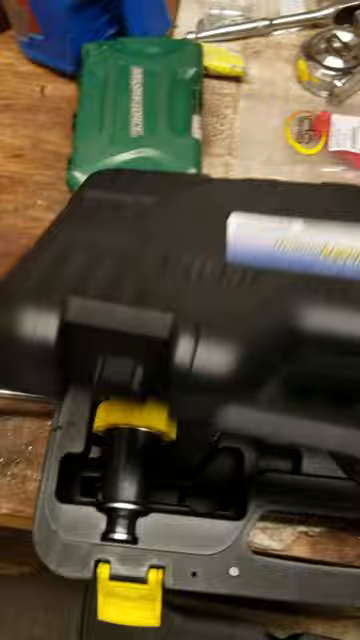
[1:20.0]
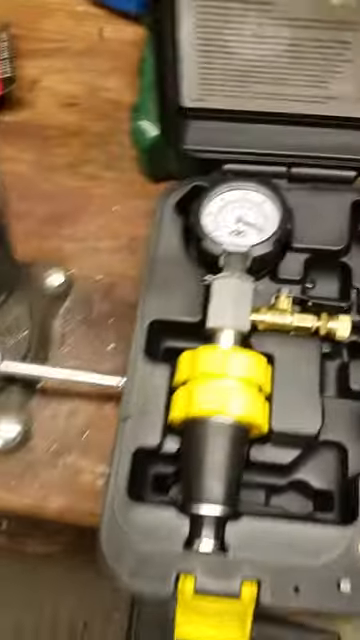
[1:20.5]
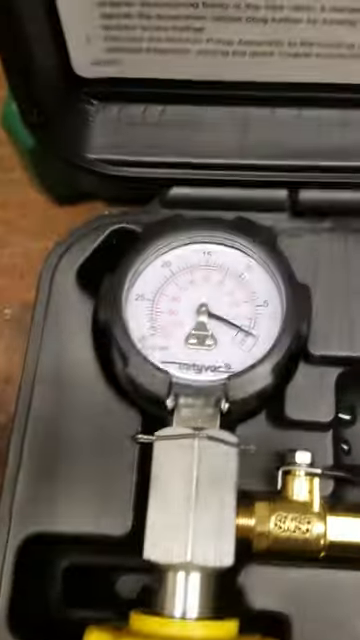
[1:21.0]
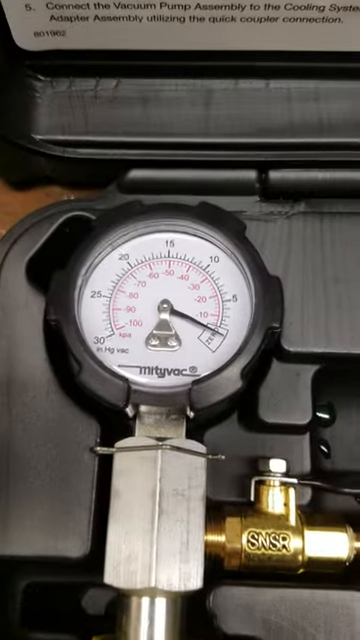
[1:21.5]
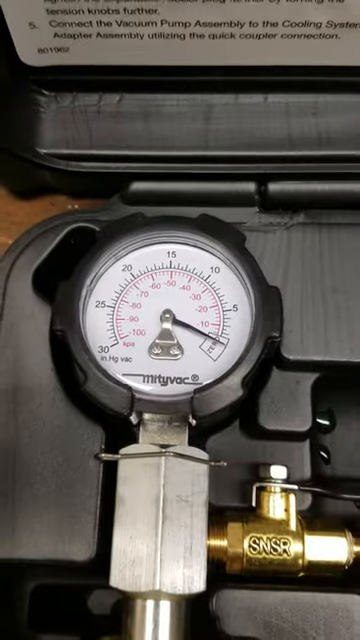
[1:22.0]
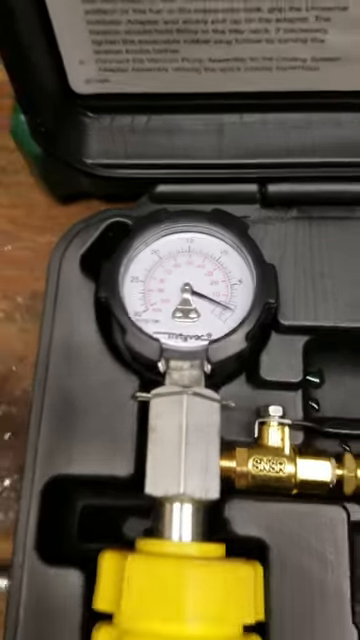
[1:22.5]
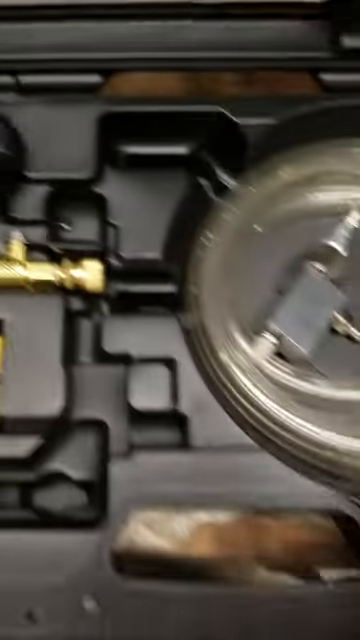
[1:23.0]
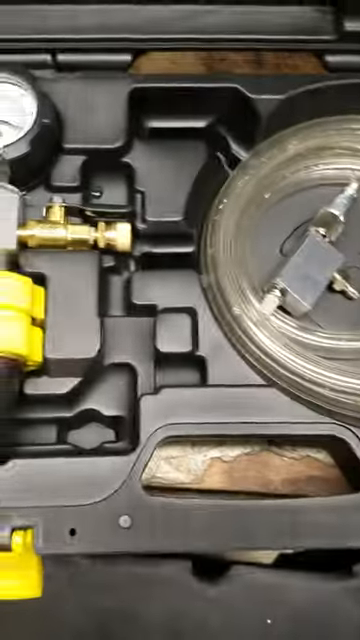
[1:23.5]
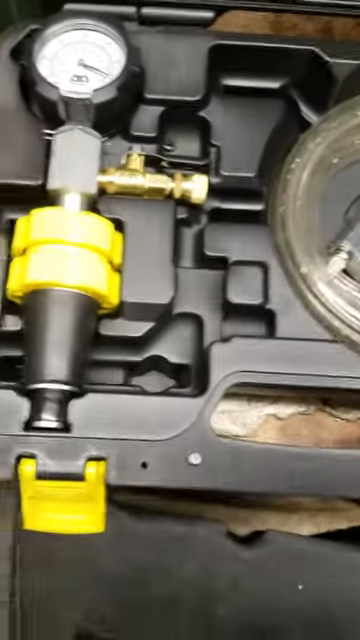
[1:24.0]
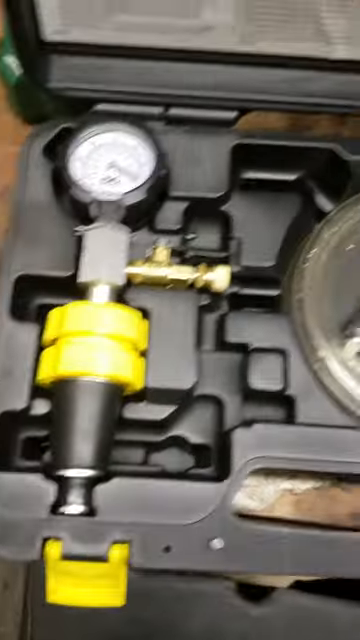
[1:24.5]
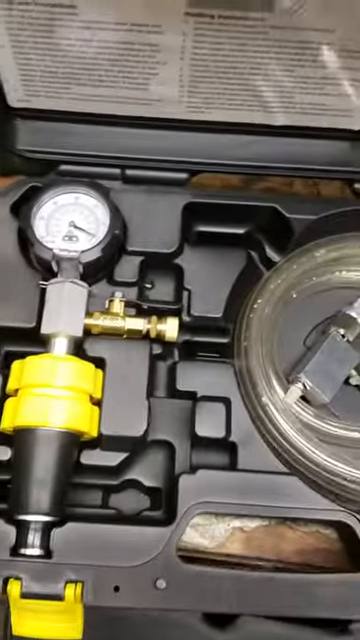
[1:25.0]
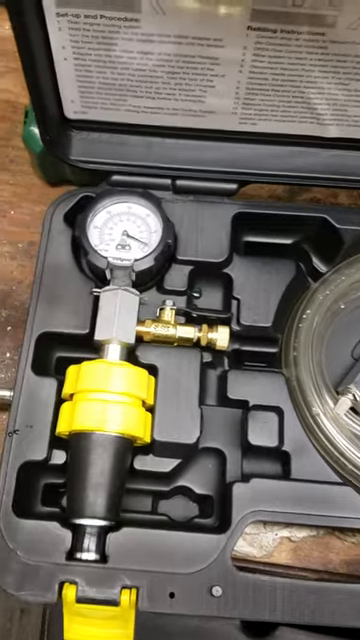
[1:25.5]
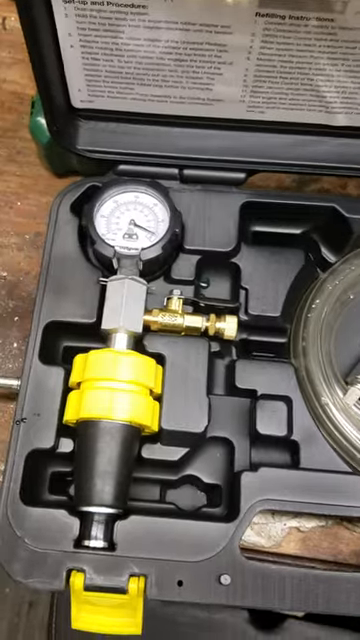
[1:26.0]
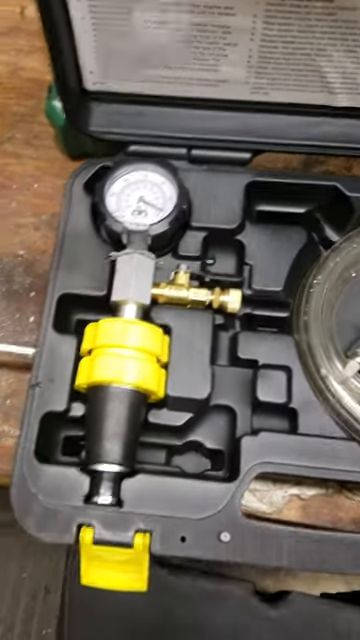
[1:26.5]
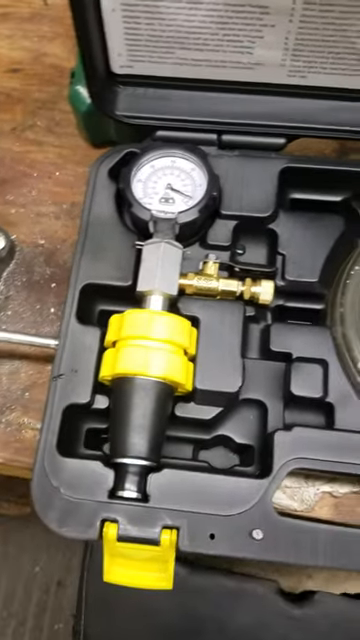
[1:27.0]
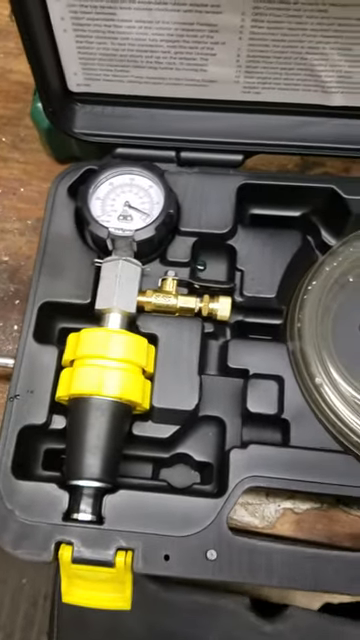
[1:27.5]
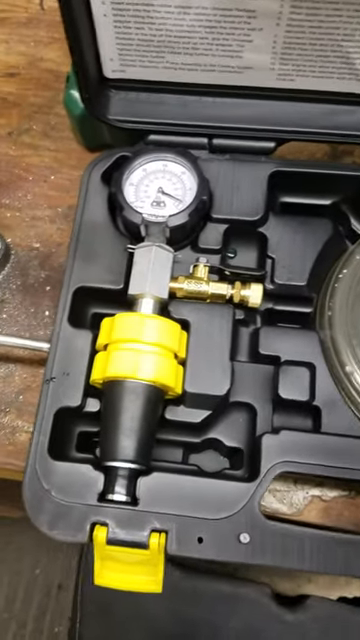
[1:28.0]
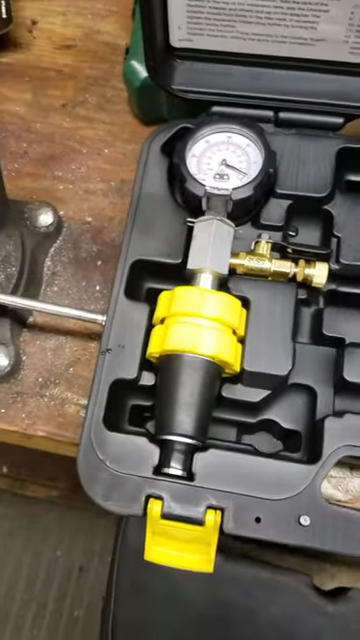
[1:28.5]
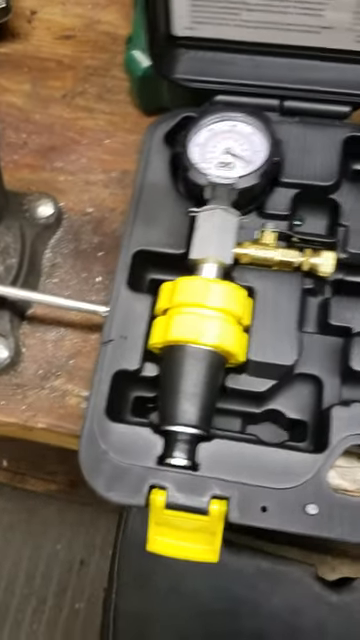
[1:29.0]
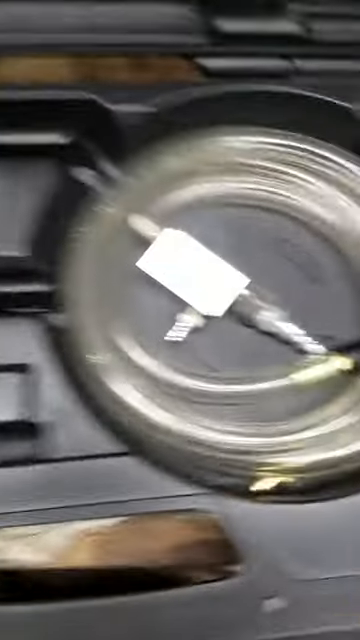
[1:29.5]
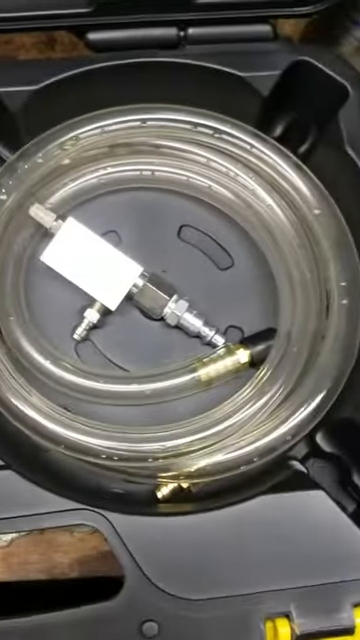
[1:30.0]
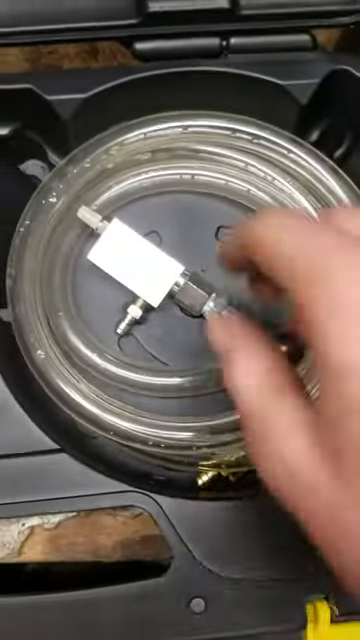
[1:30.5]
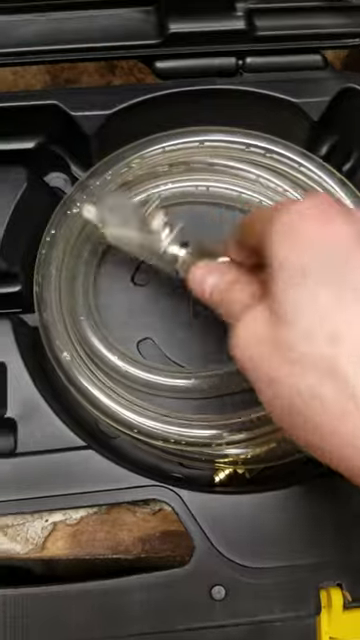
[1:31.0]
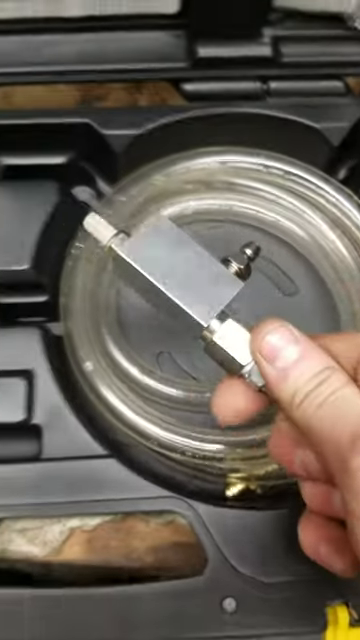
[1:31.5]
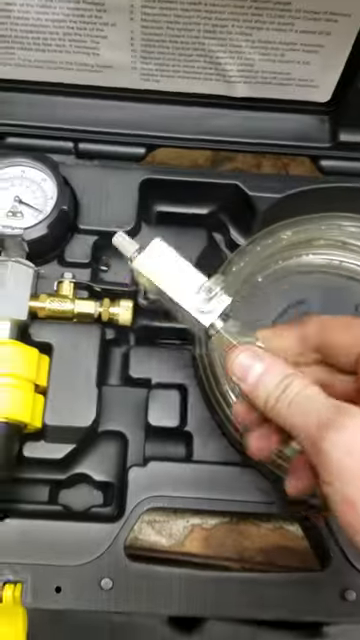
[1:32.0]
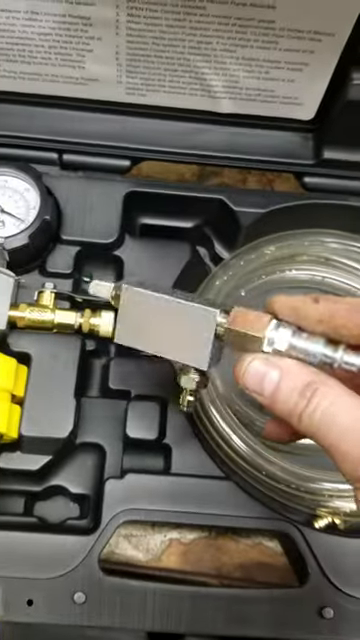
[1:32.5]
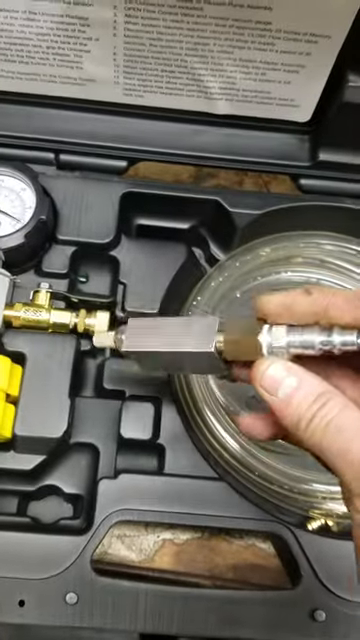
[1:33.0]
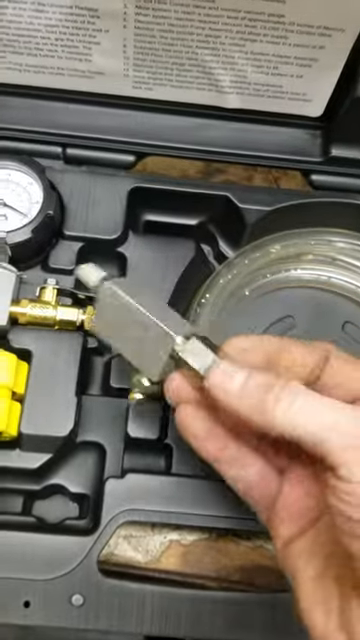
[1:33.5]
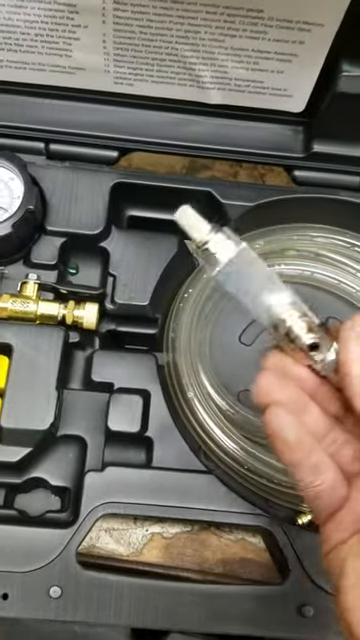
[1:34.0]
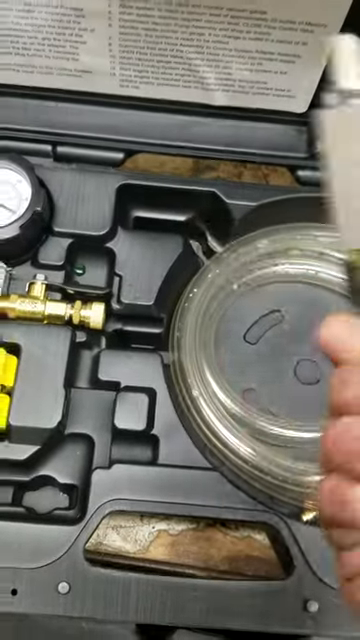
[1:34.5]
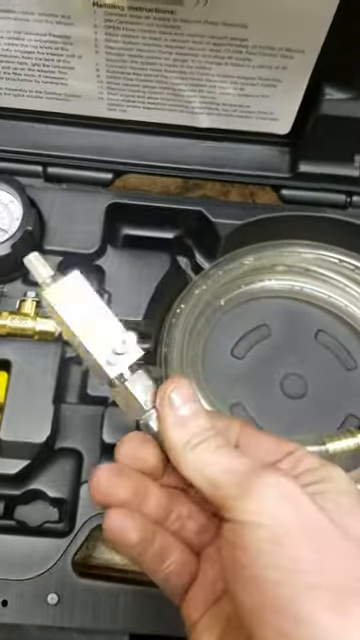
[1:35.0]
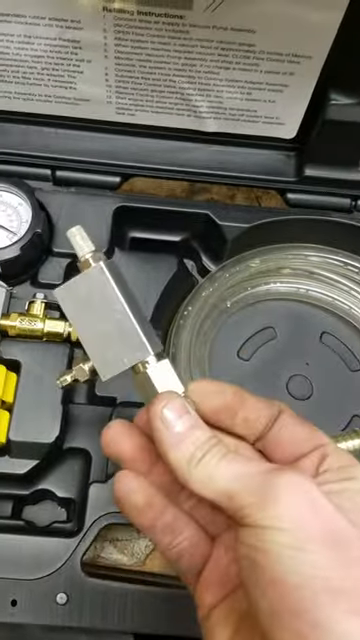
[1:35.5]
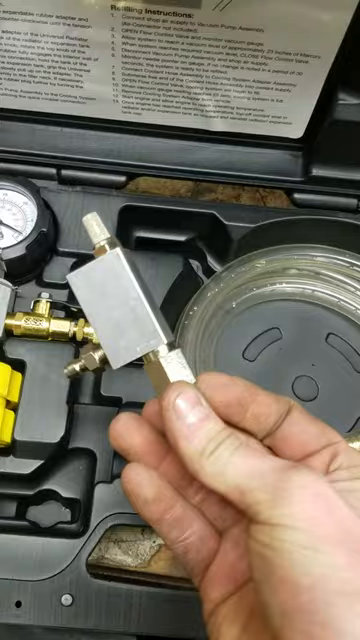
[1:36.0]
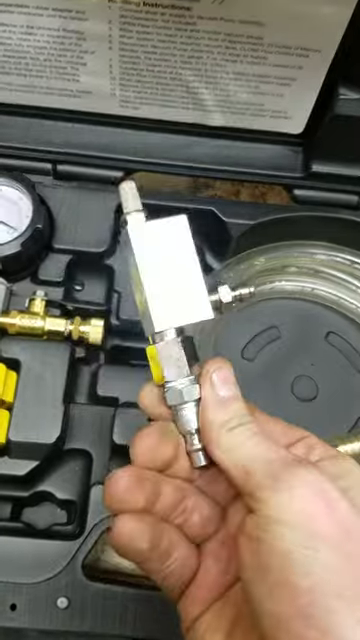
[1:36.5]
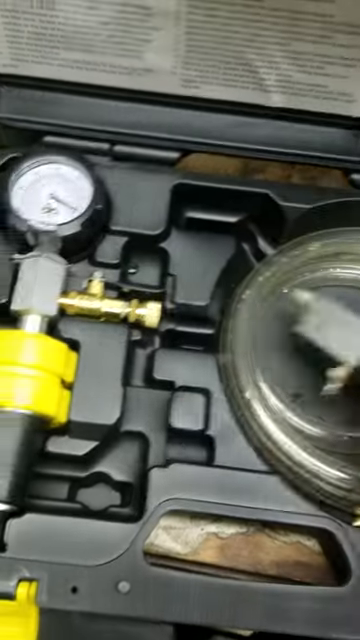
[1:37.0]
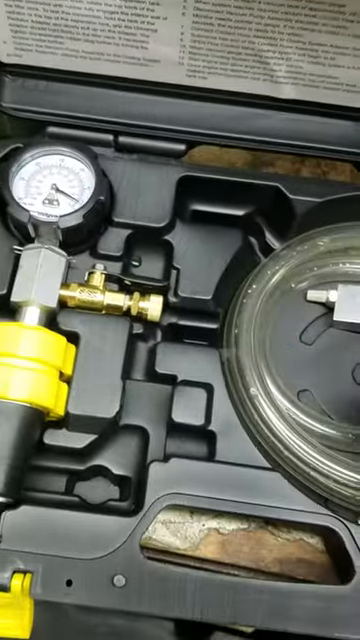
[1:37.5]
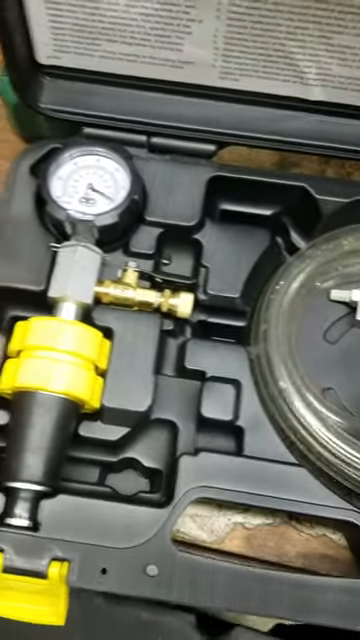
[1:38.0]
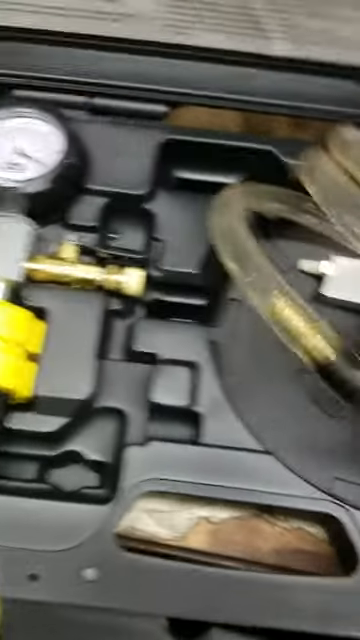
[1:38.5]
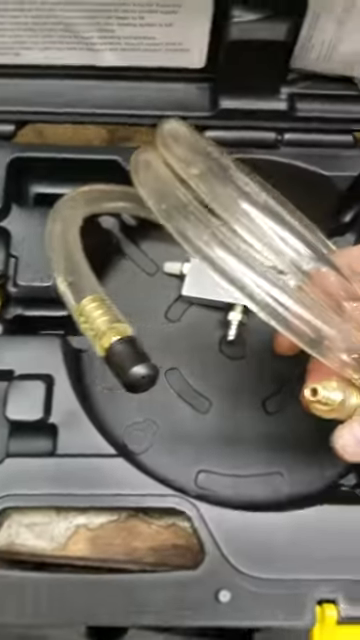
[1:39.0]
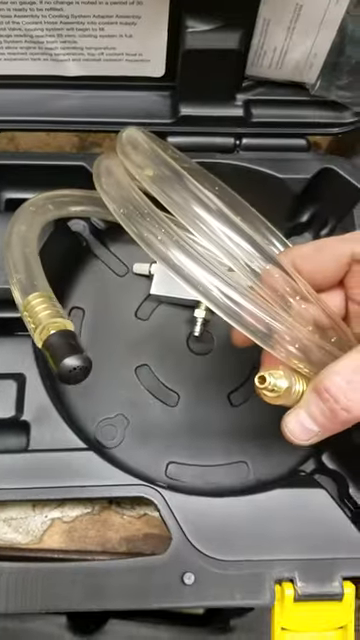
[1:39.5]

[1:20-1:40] Someone films a black case holding some tools or tubing inside; they have opened the case back up. Inside are something like a pressure valve, tubing and some couplers for putting pieces together. The person's hand picks up a coupler and kind of twirls it slightly, showing the pieces and how they would fit together. It looks like they are holding it with their right hand; the hand looks masculine, so probably a man, and the skin tone appears white or Caucasian. In the back are tools, including something green, something blue and a few yellow pieces.